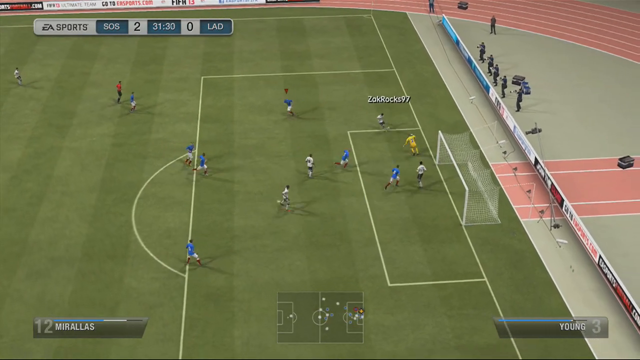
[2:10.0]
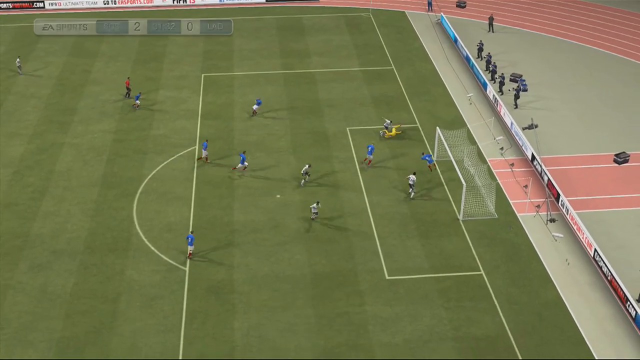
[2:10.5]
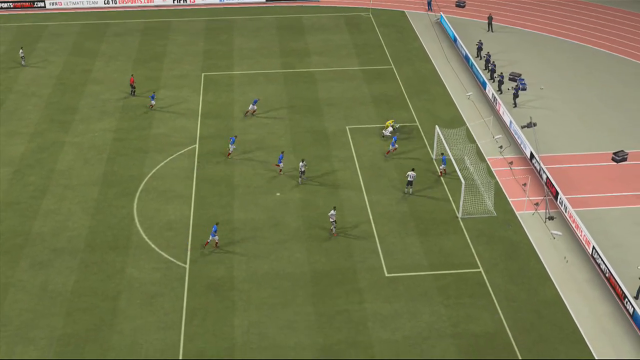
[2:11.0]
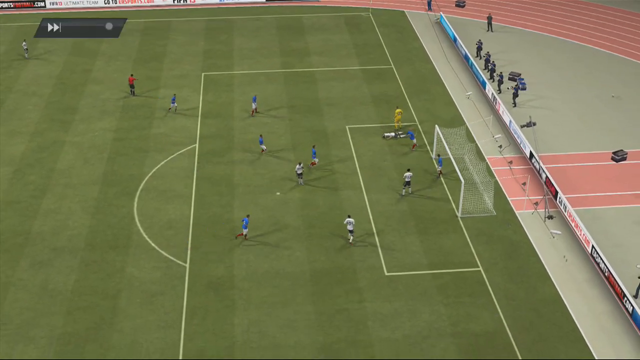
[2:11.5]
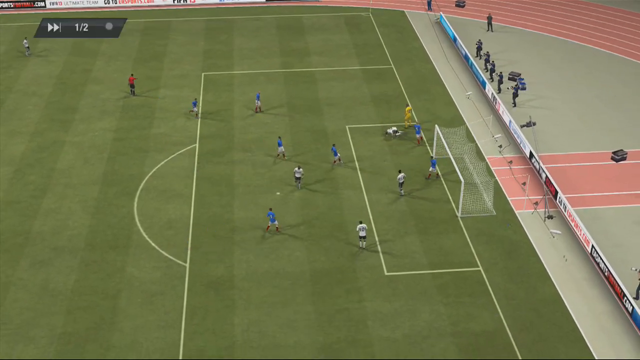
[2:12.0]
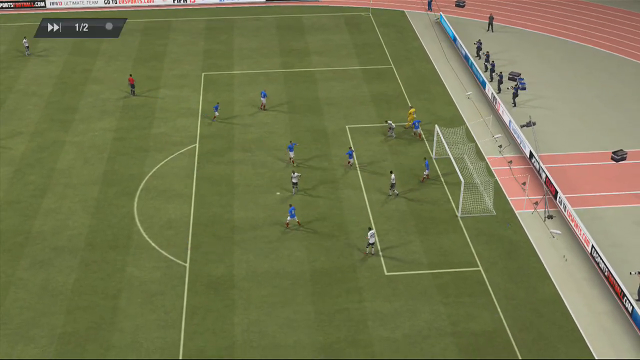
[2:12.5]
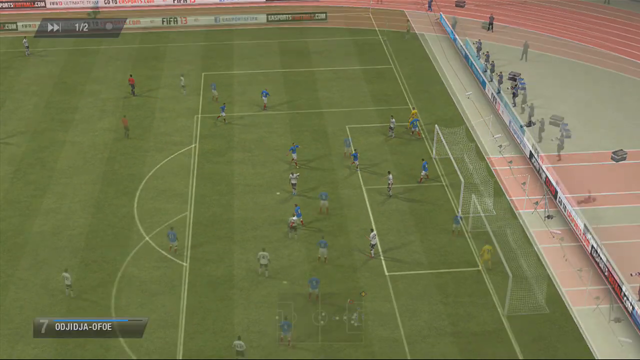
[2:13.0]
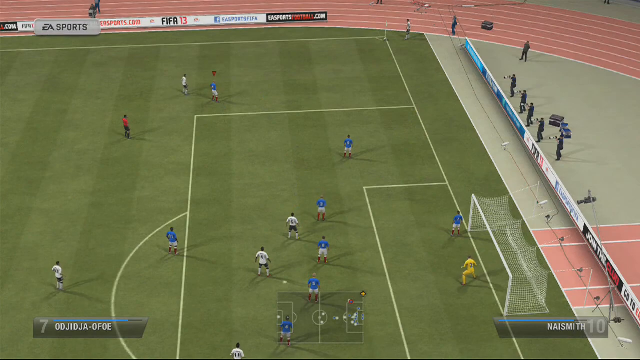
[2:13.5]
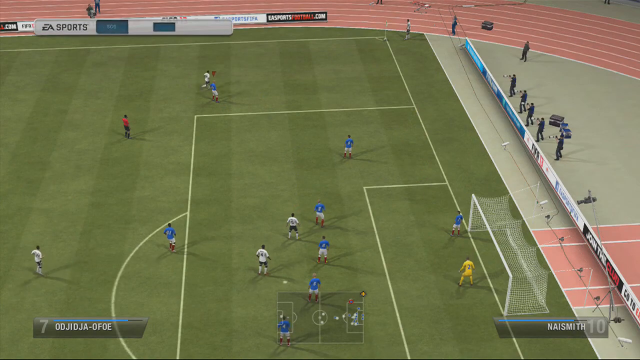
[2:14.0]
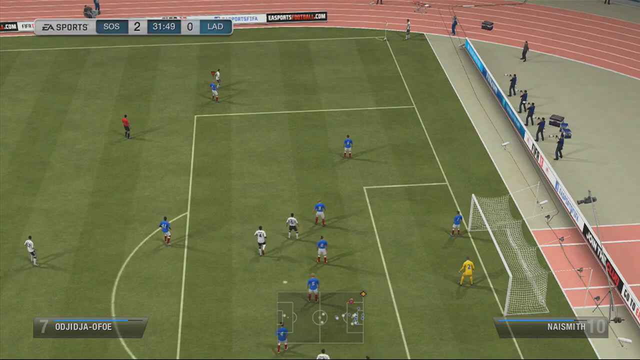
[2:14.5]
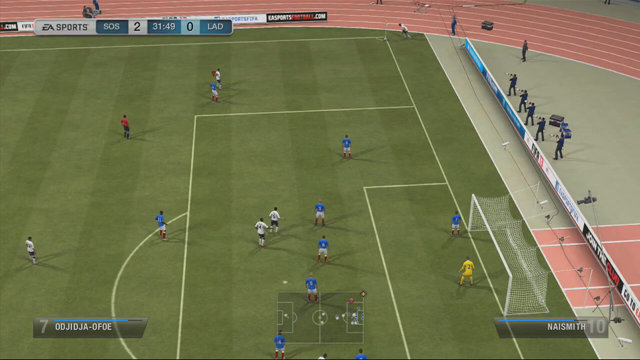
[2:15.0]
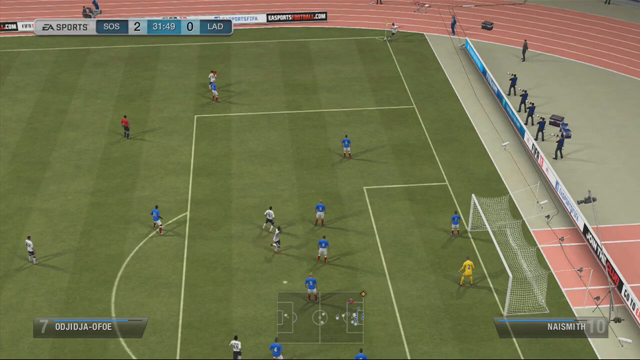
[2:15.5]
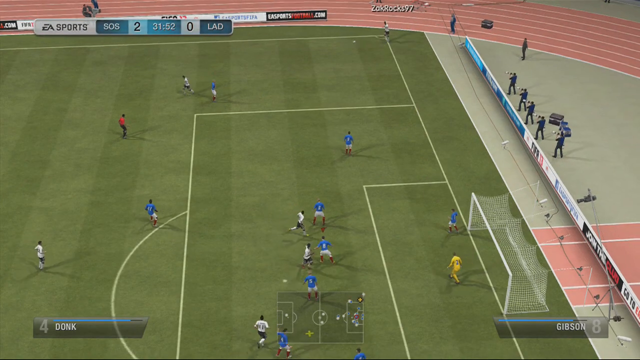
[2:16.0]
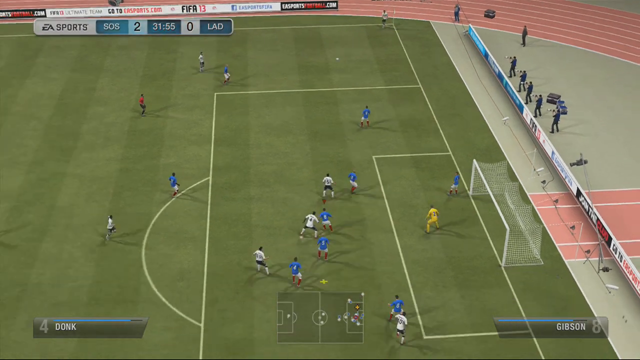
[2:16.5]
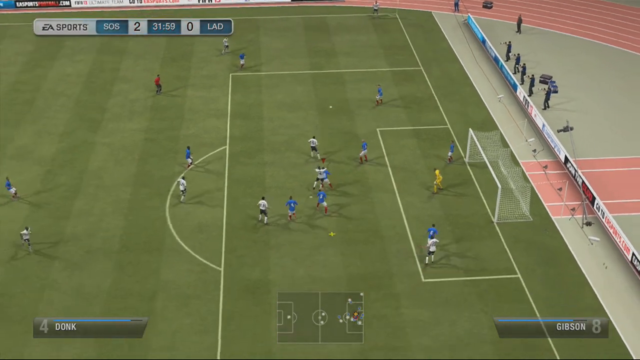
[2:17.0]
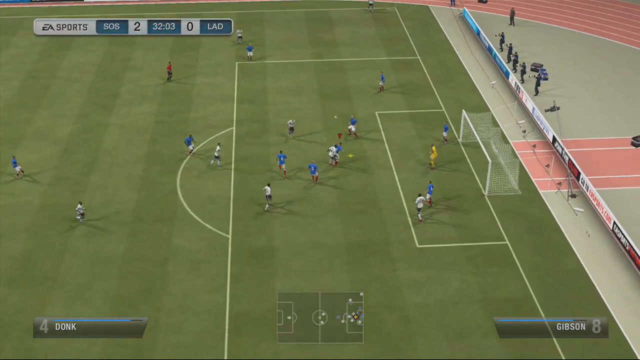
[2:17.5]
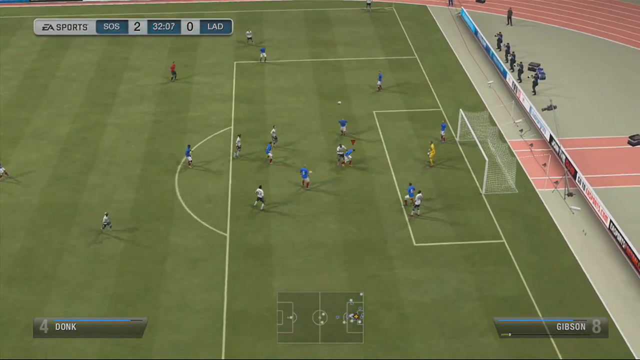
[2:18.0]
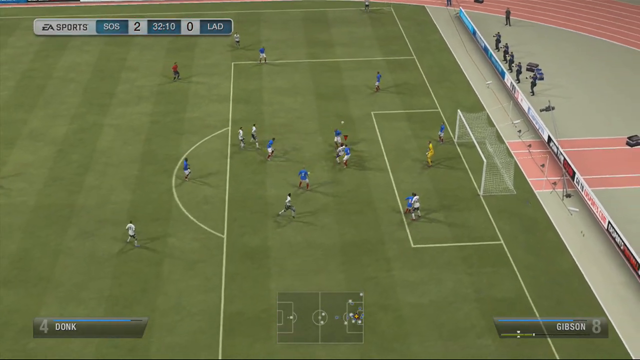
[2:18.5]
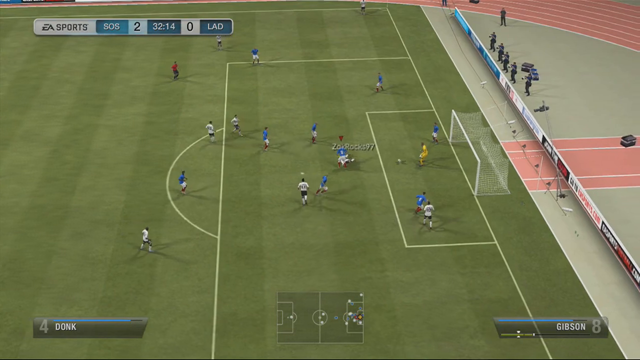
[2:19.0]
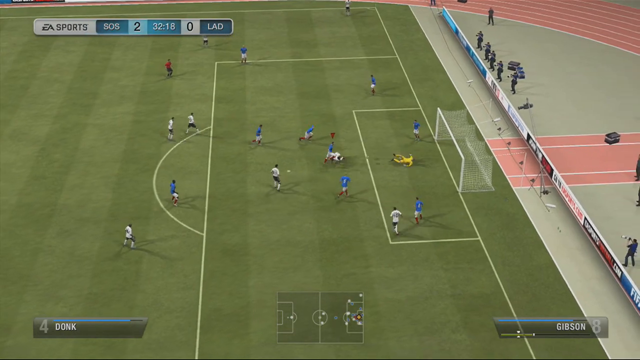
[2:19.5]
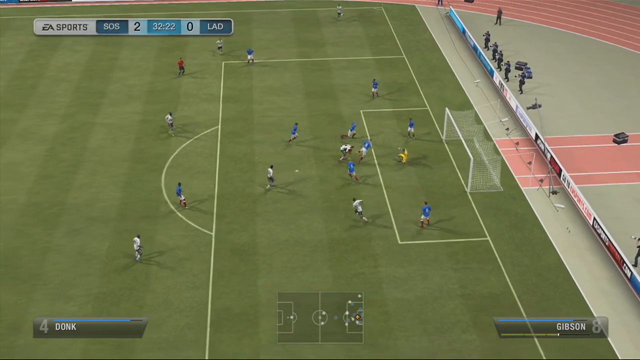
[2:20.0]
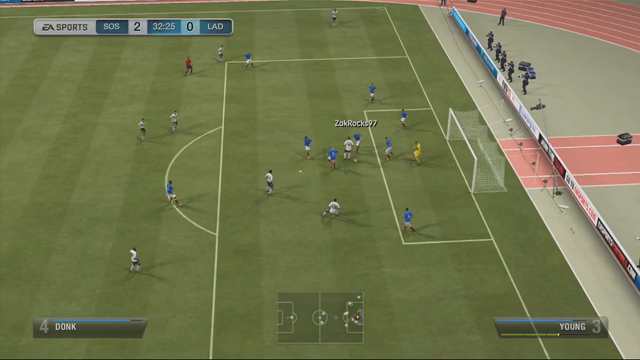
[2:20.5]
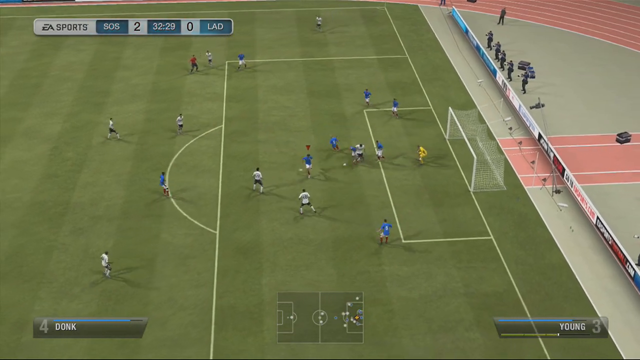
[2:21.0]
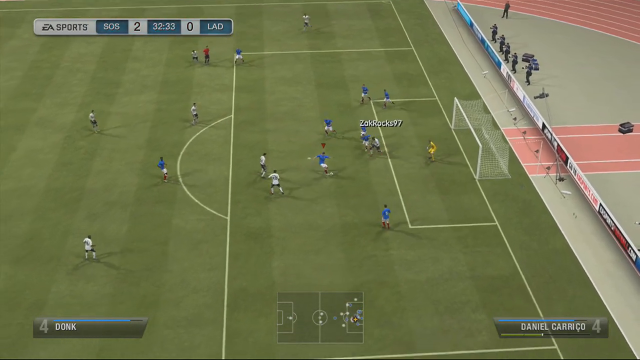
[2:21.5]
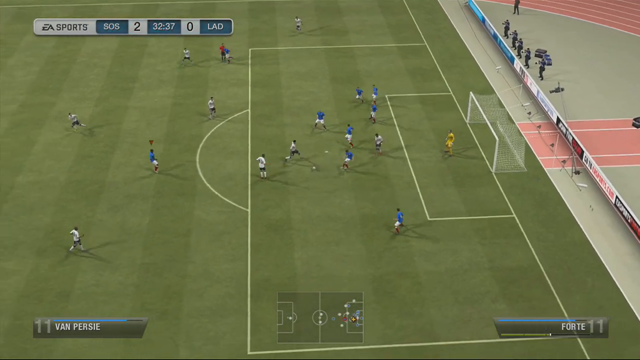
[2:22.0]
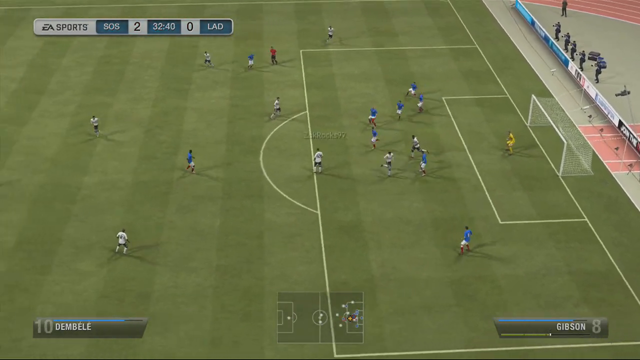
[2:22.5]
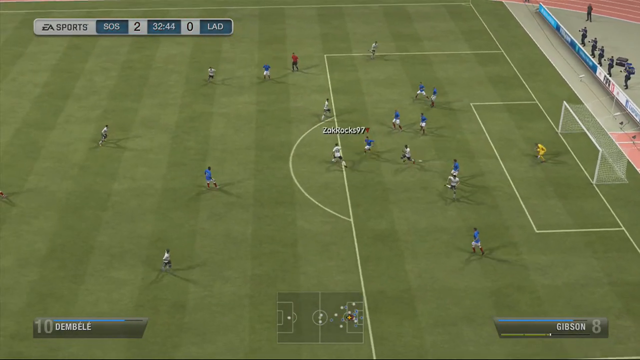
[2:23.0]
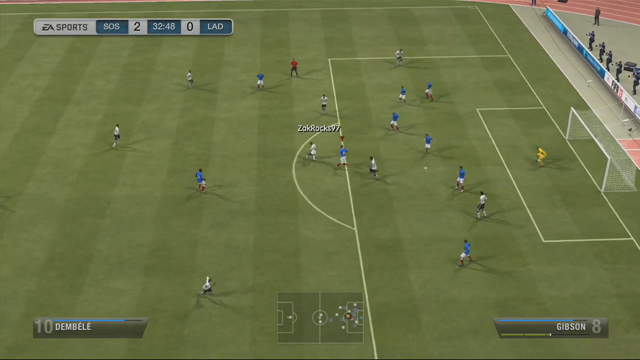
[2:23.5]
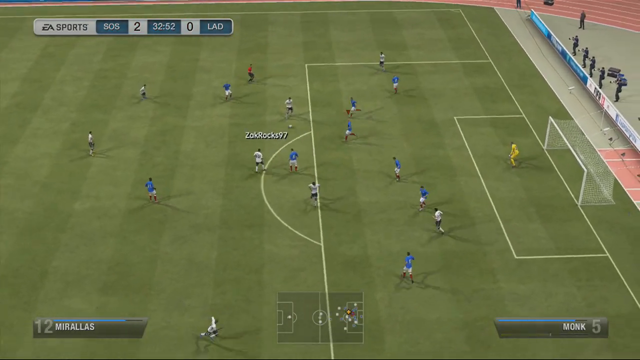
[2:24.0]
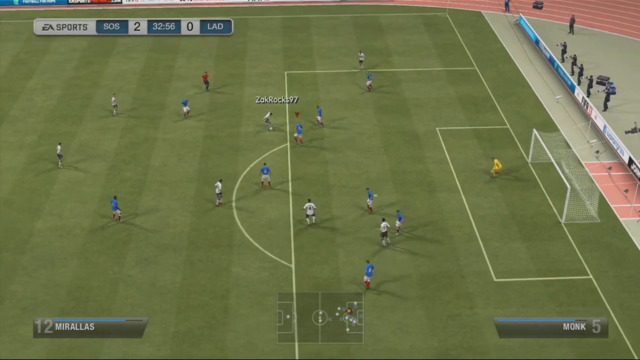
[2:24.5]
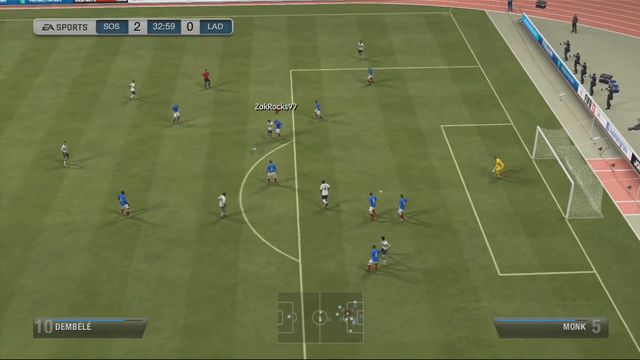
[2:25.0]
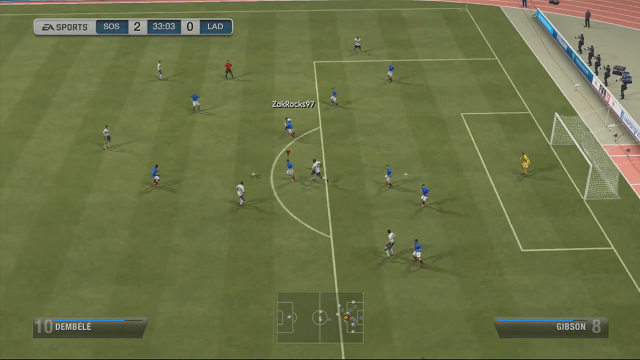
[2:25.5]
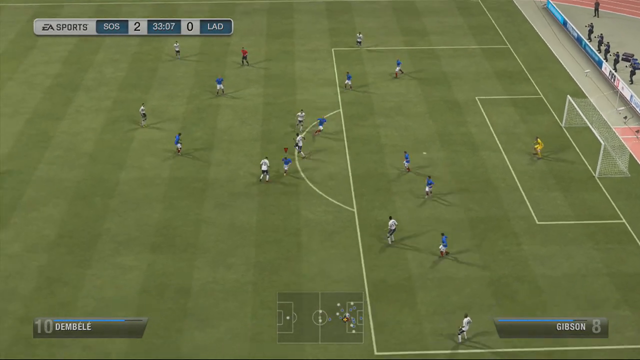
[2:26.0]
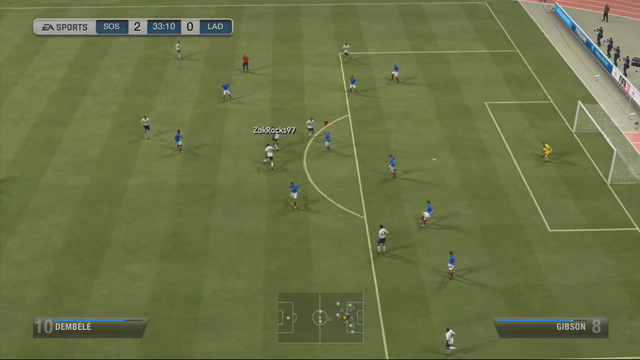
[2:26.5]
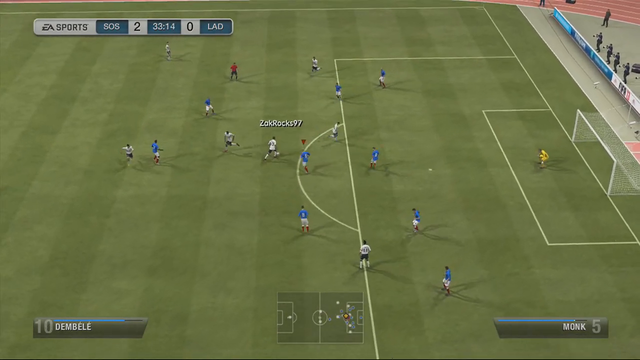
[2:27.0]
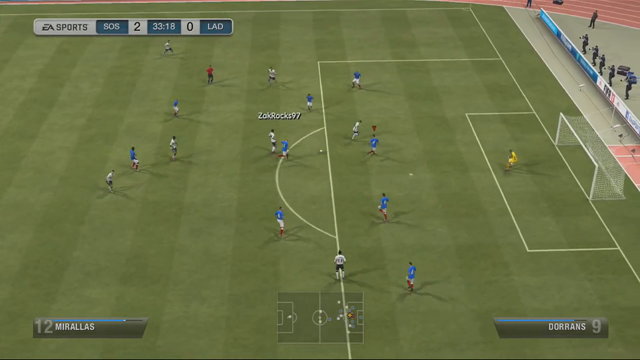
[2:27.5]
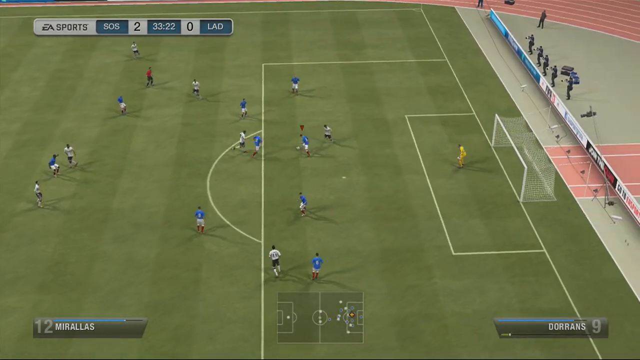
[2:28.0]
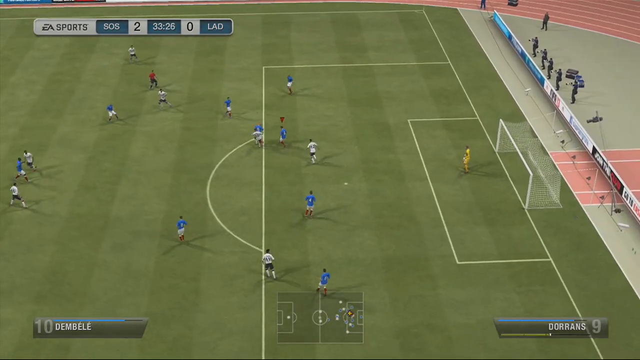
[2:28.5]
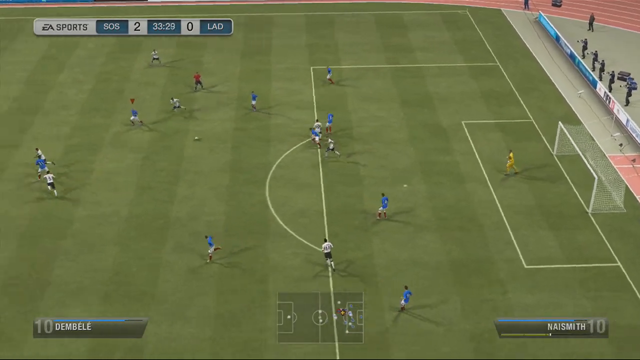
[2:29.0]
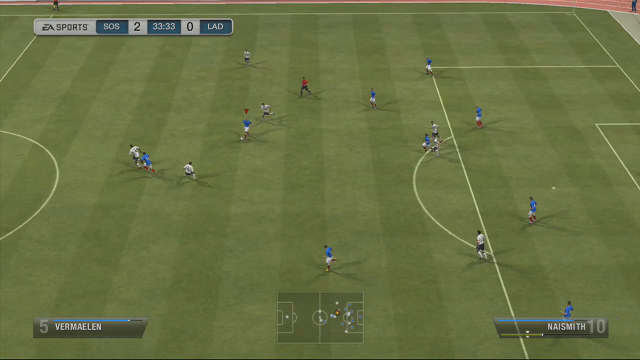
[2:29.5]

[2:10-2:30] A soccer video game shows the light green and slightly darker green striped field from above, looking down on the players. One team wears short-sleeved dark blue shirts and white shorts; the other wears short-sleeved white shirts with black shorts. A goal on the right of the screen is a white square with a net hanging off the back of it. The goalie, in a yellow uniform, stands in front of the goal waiting for a ball being kicked in from out of bounds; it is kicked toward the goal, and he dives and saves it. In the top left corner is a white stripe with the word "sports" in blue, then a small blue square with the letters "SOS" in white, the number "2", a blue square reading "31 minutes 49 seconds", another white square with the number "0", and a blue square with the letters "lad" in white.